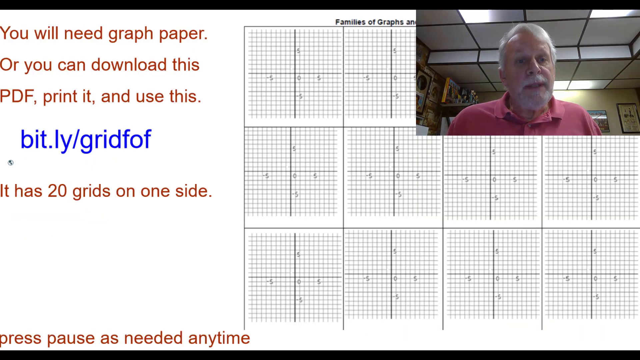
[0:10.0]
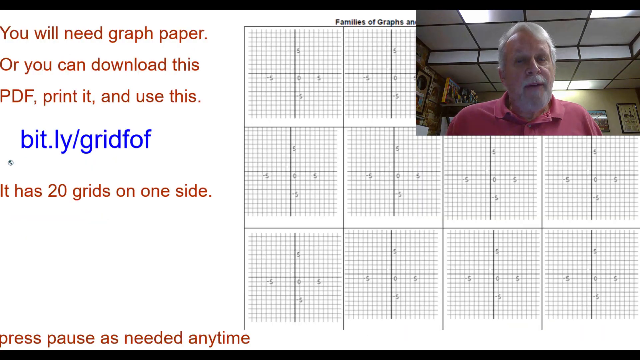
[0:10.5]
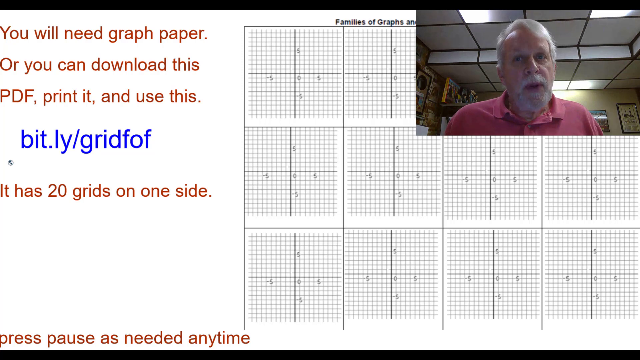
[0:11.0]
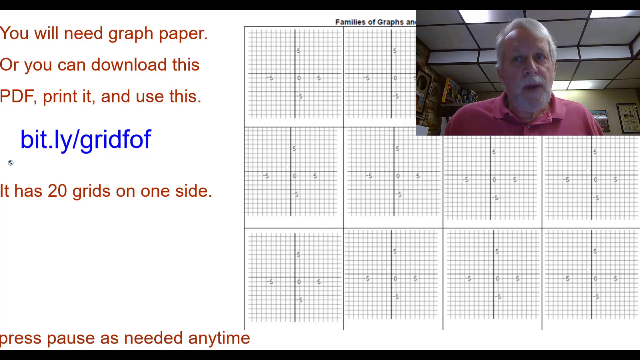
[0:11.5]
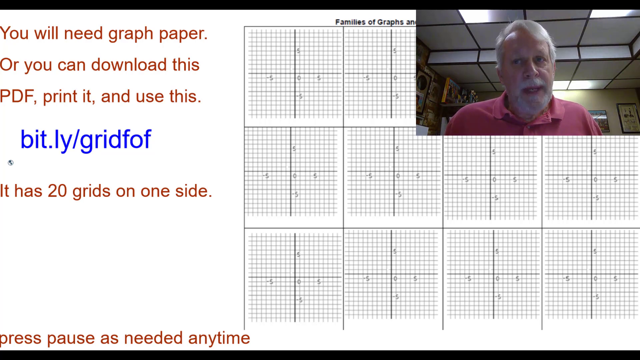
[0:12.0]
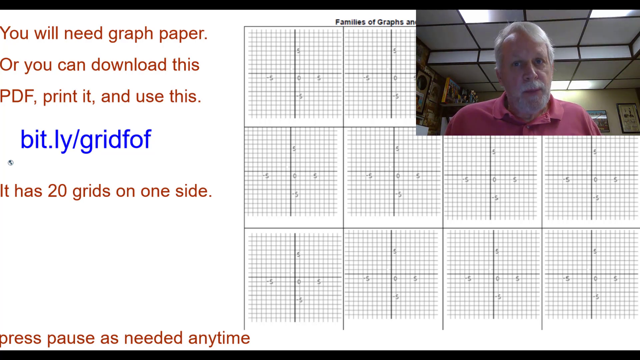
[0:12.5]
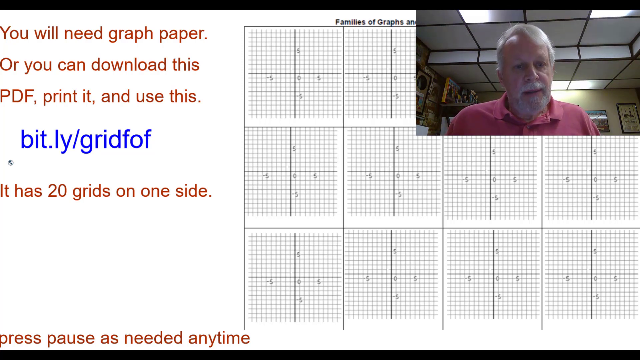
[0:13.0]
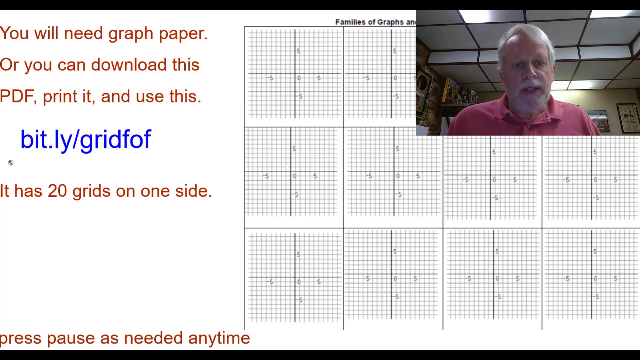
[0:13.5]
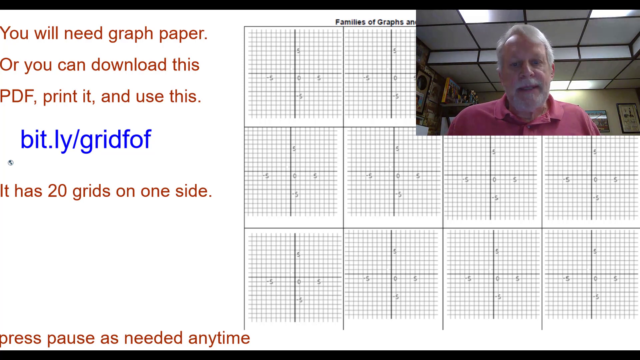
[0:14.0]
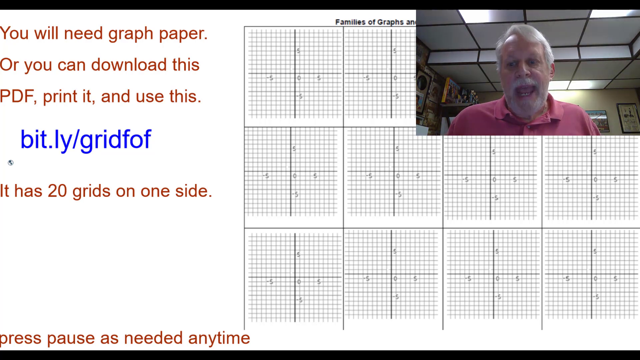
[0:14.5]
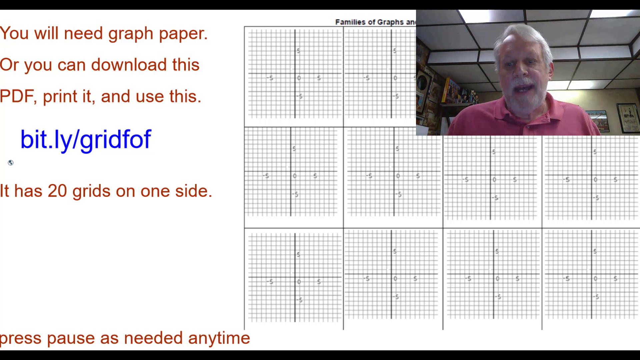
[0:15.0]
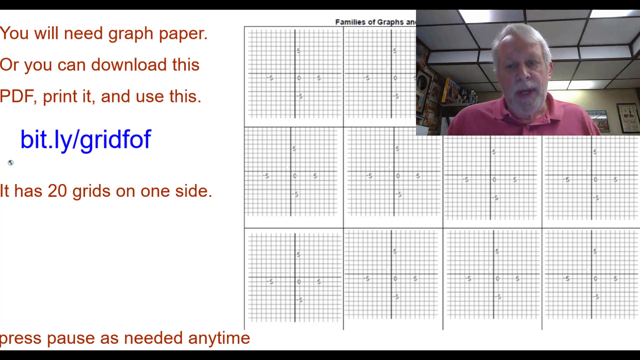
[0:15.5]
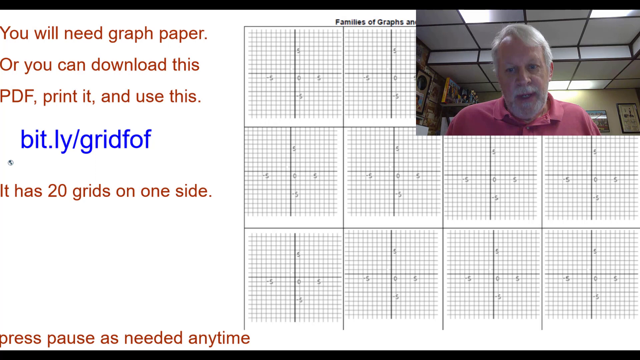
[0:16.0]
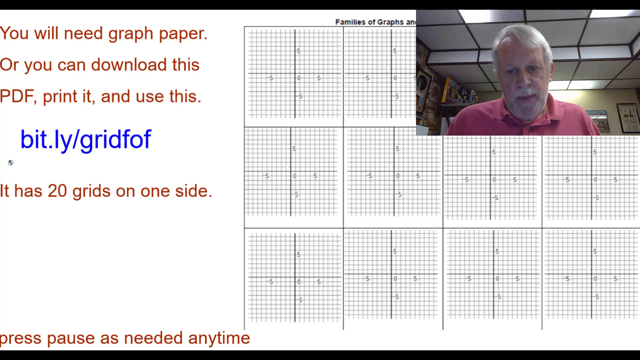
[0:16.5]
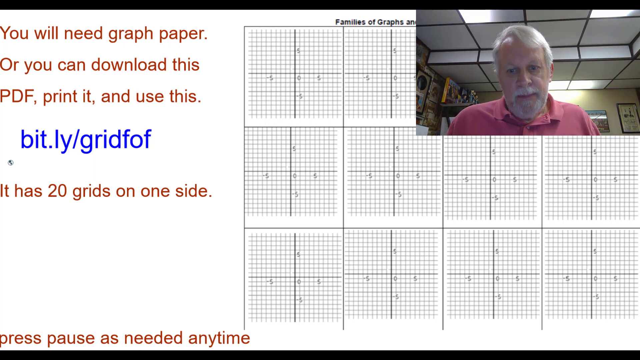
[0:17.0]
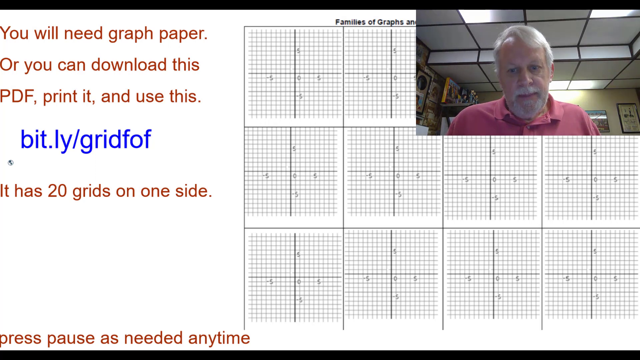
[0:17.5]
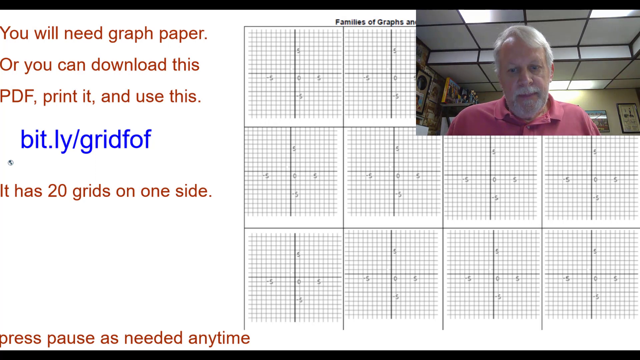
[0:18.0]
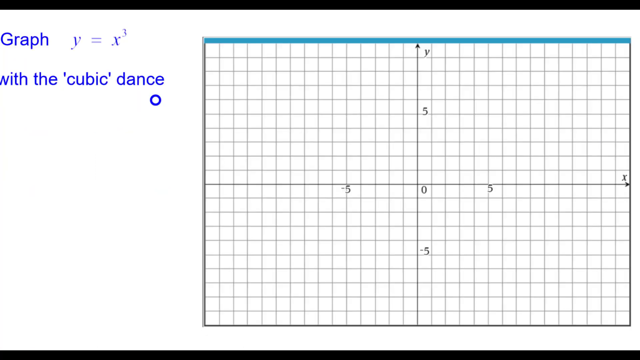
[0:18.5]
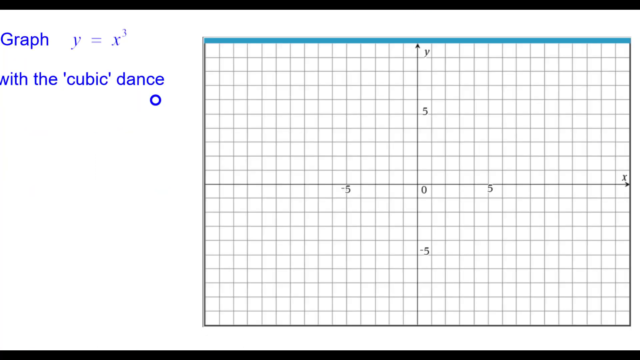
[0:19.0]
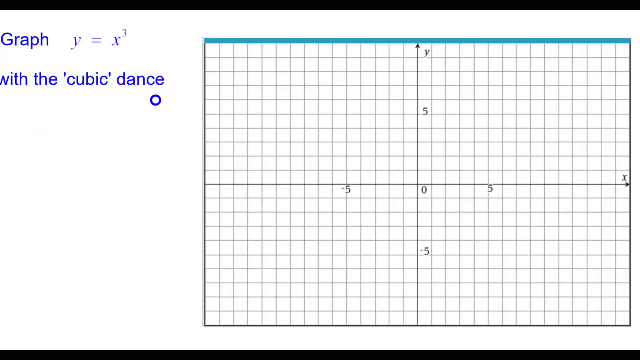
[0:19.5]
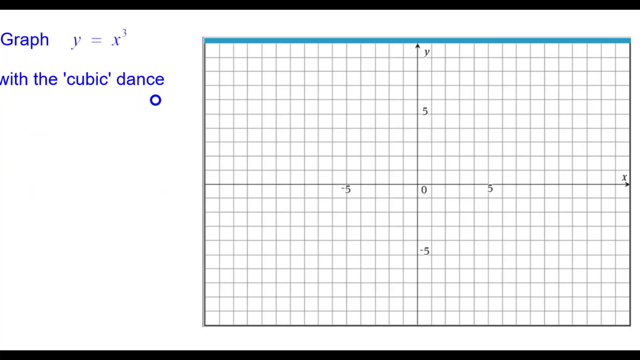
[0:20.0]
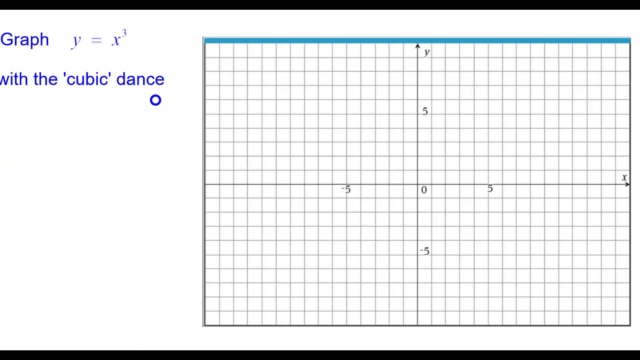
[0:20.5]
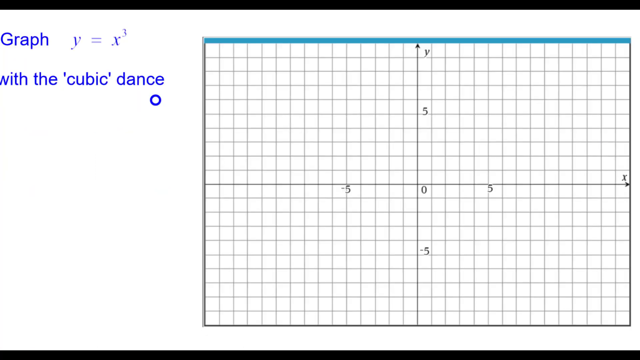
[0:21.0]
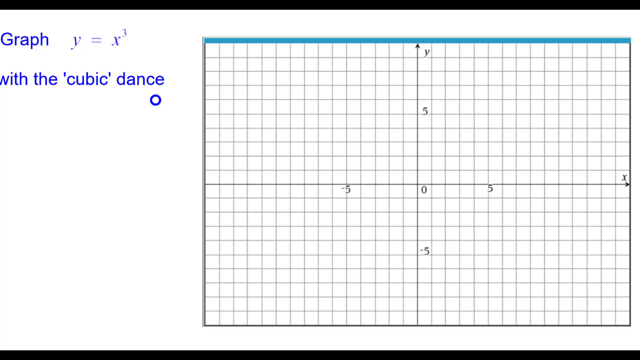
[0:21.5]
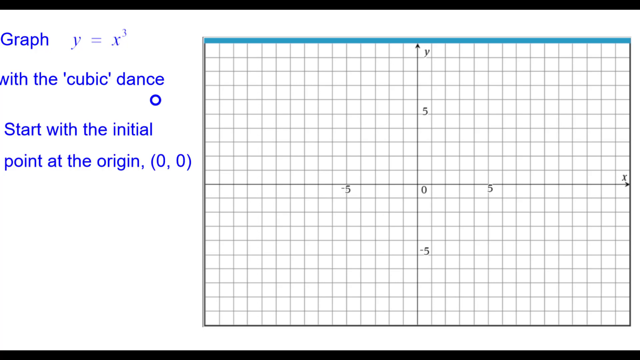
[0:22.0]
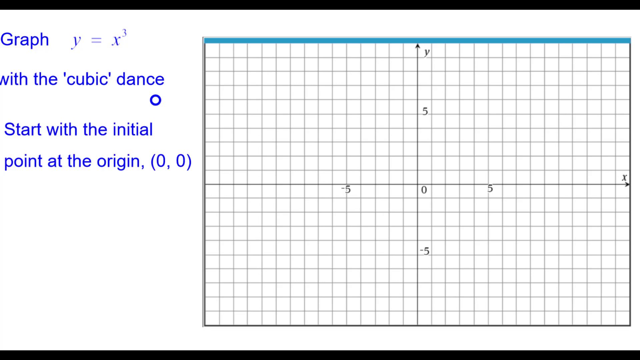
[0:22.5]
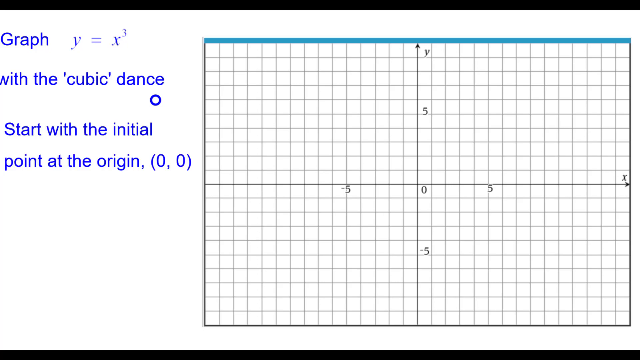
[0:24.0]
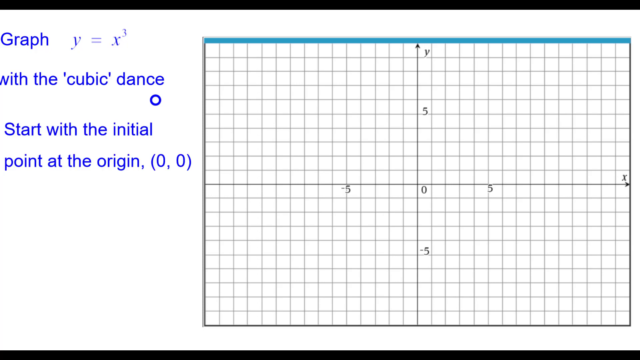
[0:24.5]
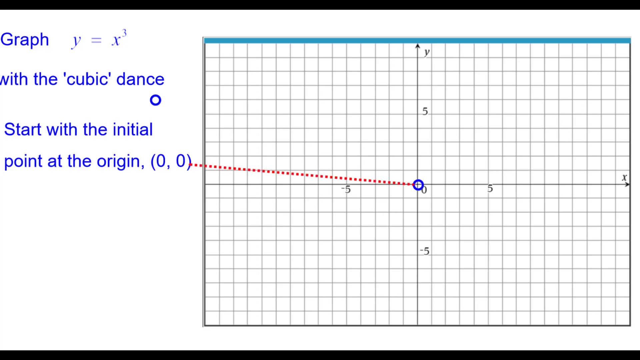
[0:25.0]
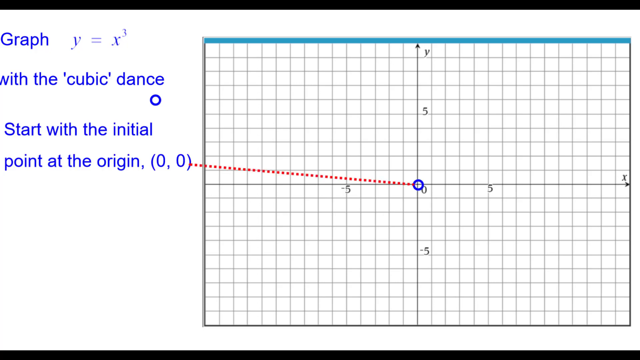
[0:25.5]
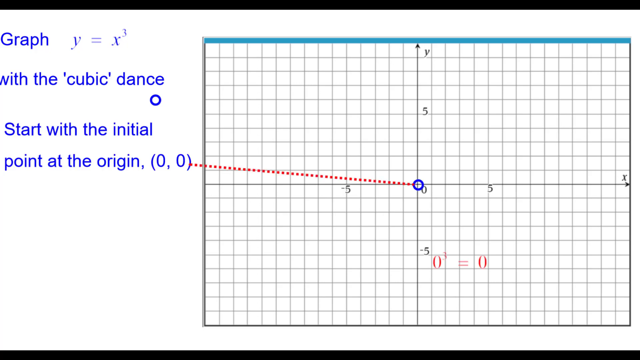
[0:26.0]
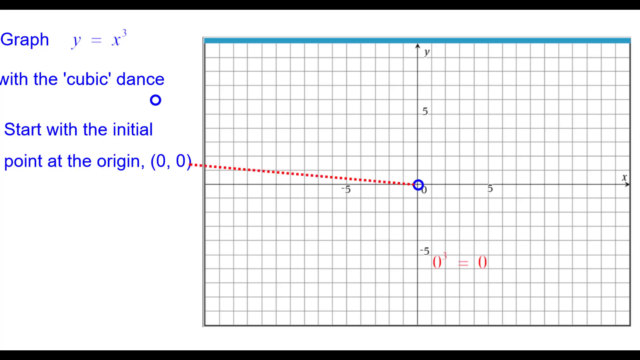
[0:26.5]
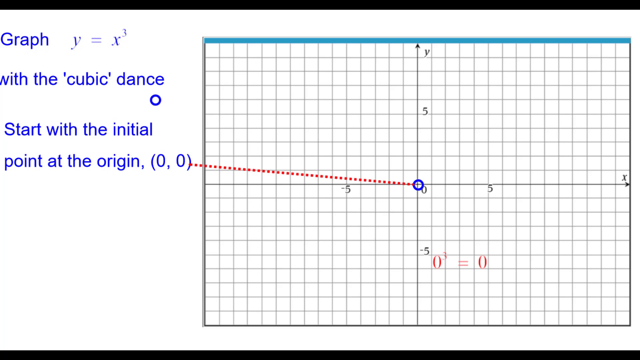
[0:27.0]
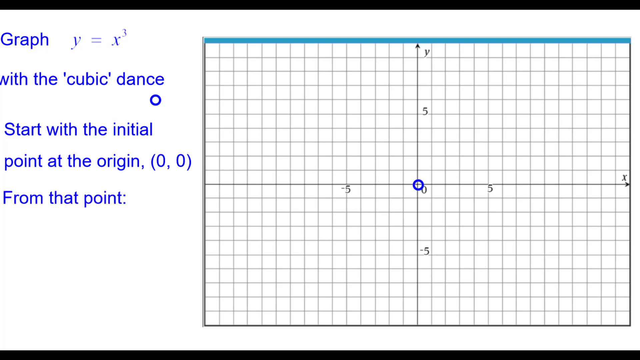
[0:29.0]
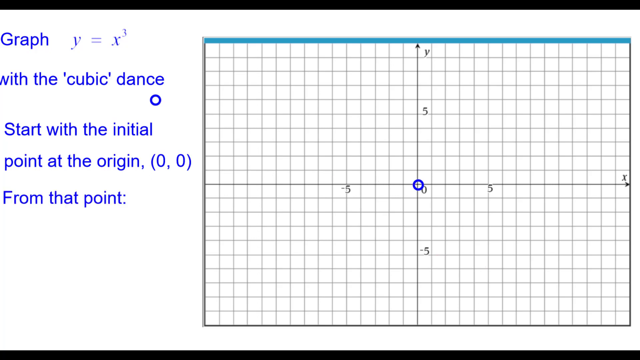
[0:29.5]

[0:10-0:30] Behind the small cutout of the man, there now almost appears to be graph paper, a whole bunch of squares, with vertical and parallel lines that almost create four quadrants. On the left-hand side there is still a white area, where text reads "people need graph paper. Or you can download this PDF, print it, and use this." A link is underneath, and underneath that link it has 20 grids on one side. The man in the upper right-hand corner speaks continuously. The view then changes: the webcam cutout of him is gone. In the upper left of the screen, blue text reads "graph y equals x to the third power", with "with the cubic dance" underneath. To the right is the graph paper or graph table, with vertical and parallel lines creating four quadrants, and kind of a blue line goes across the top of the graph. Additional text then appears on the left: "start with the initial point at the origin, 0,0", and some red dots point to that place on the graph paper.